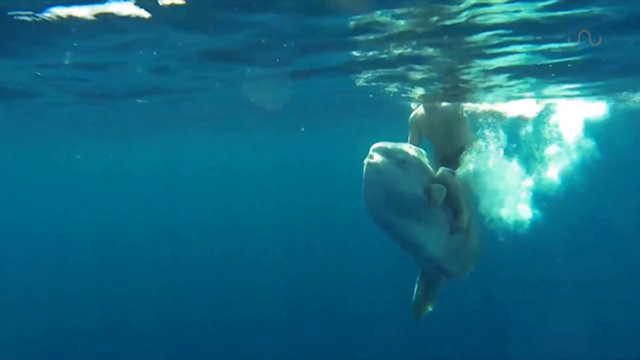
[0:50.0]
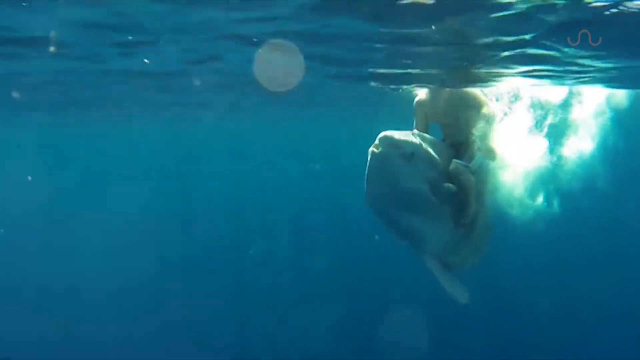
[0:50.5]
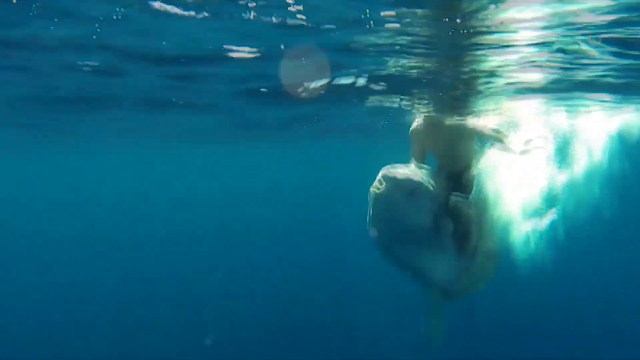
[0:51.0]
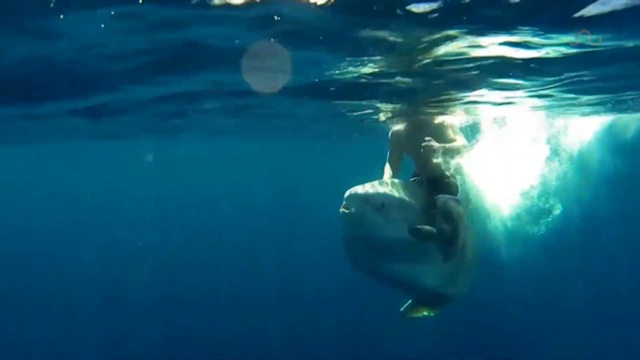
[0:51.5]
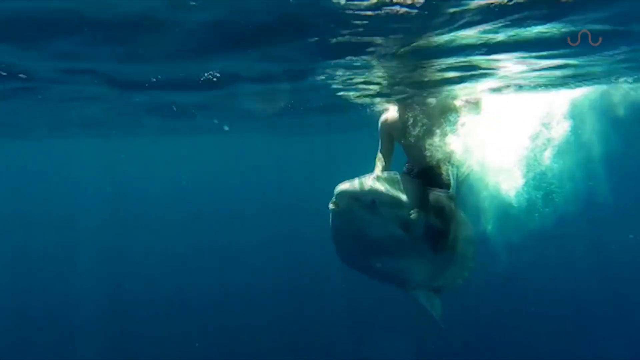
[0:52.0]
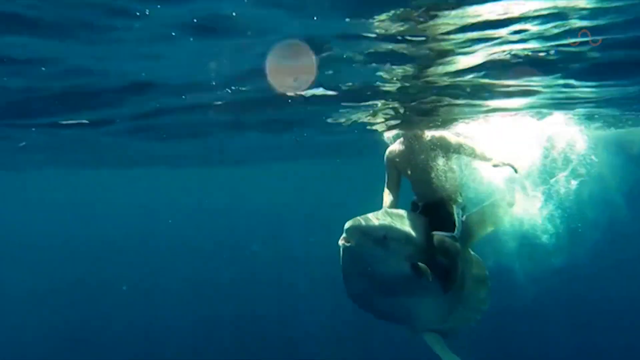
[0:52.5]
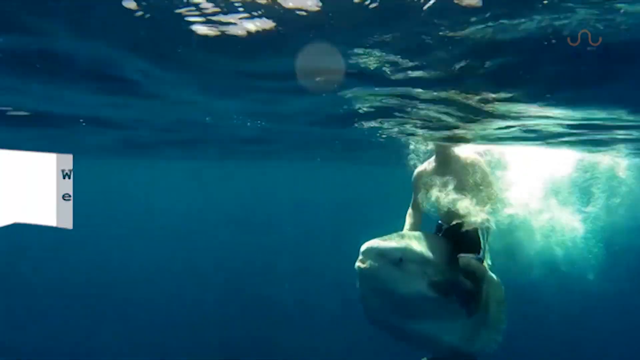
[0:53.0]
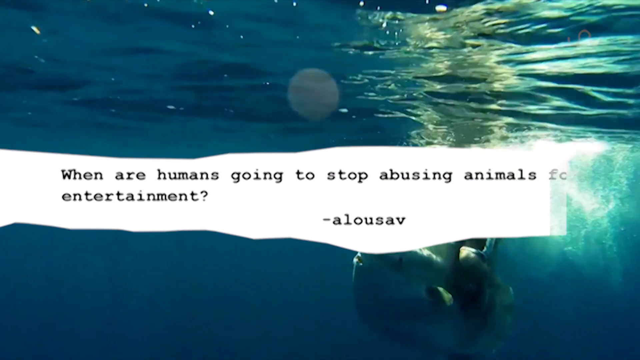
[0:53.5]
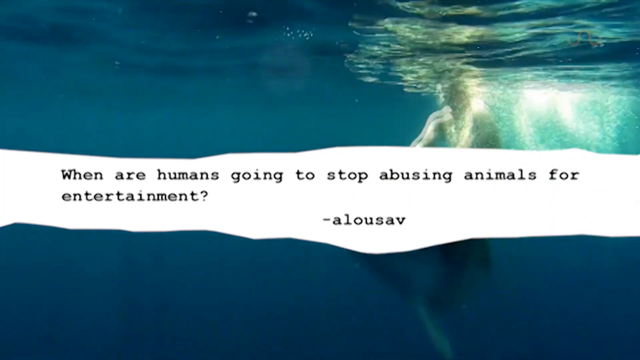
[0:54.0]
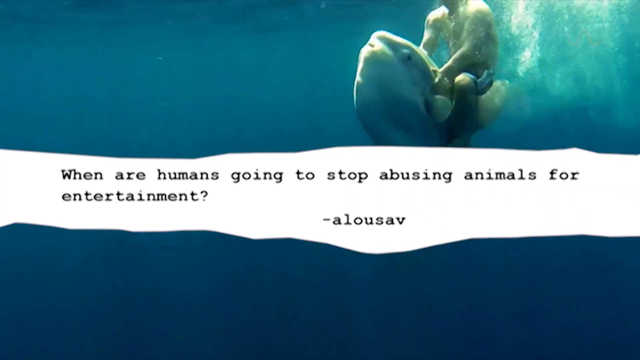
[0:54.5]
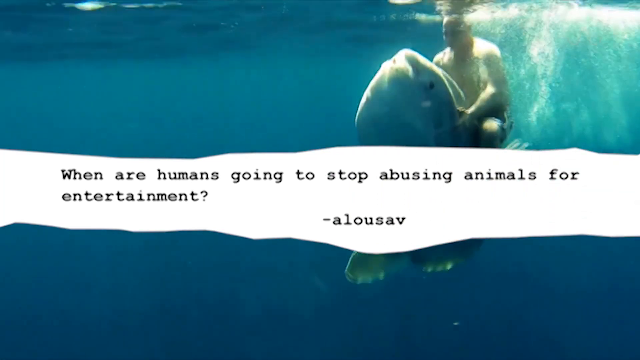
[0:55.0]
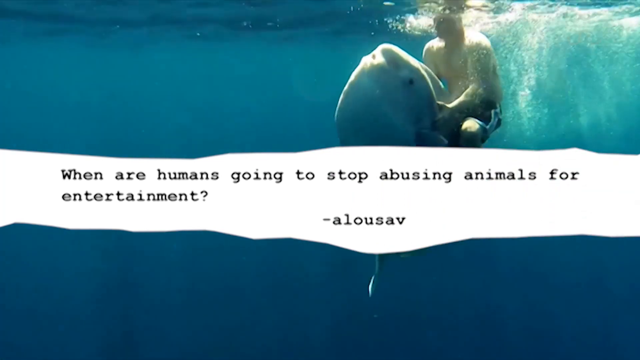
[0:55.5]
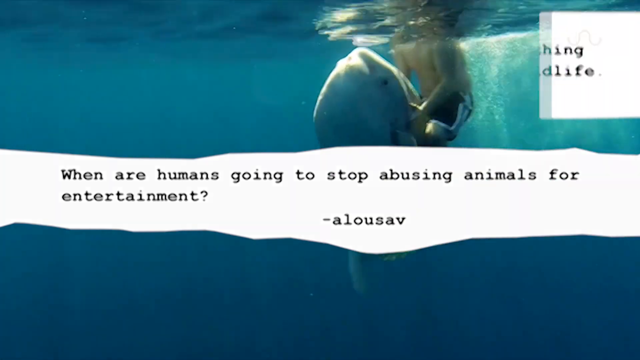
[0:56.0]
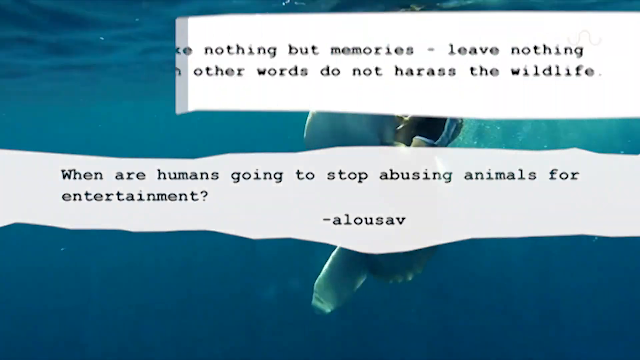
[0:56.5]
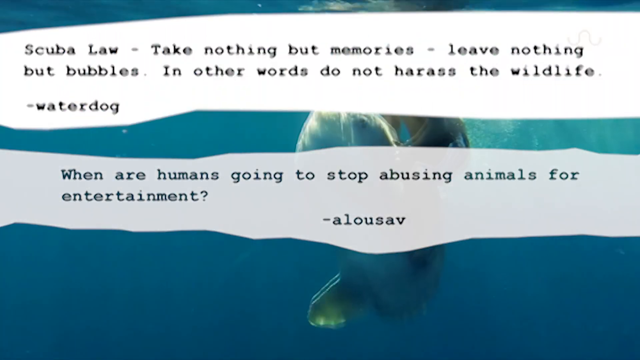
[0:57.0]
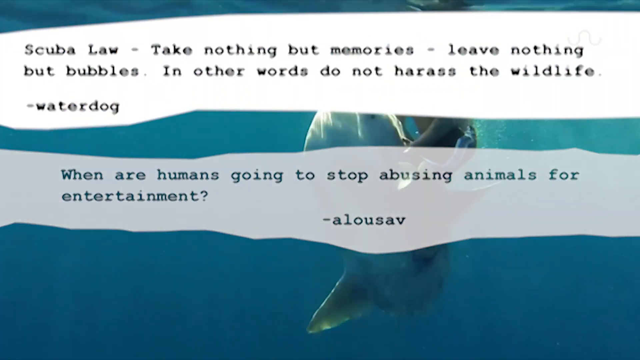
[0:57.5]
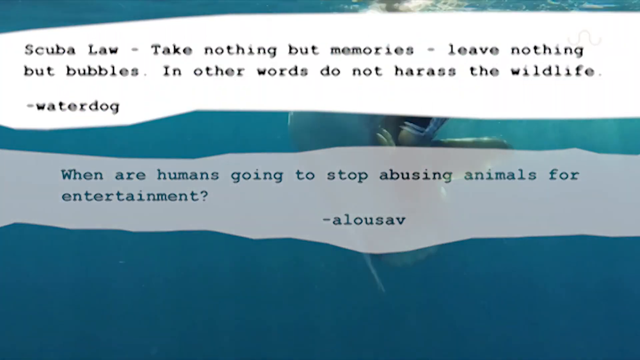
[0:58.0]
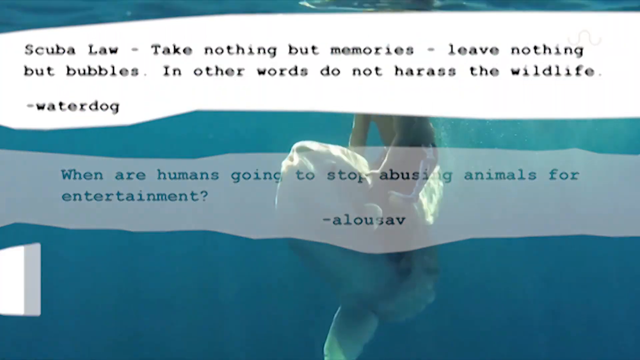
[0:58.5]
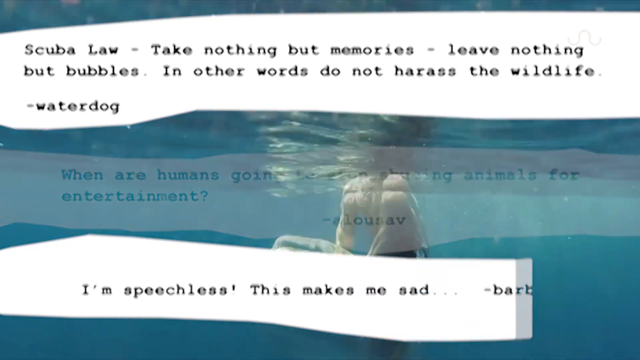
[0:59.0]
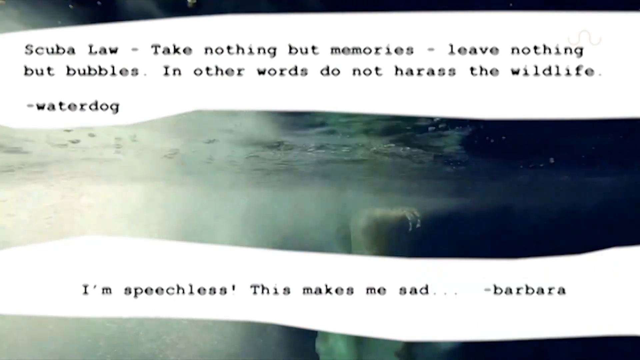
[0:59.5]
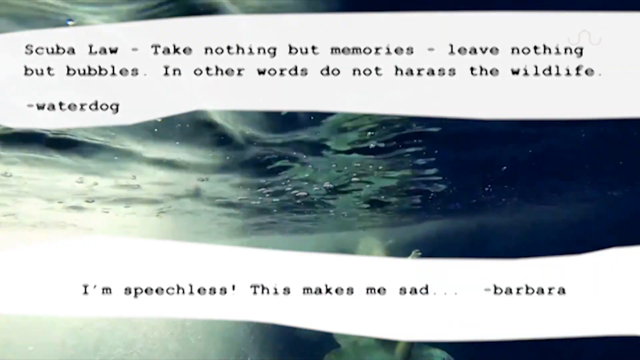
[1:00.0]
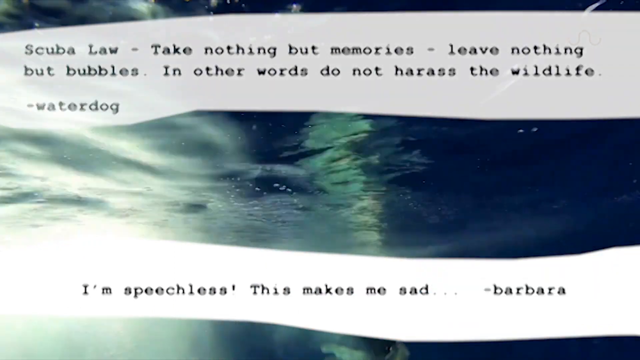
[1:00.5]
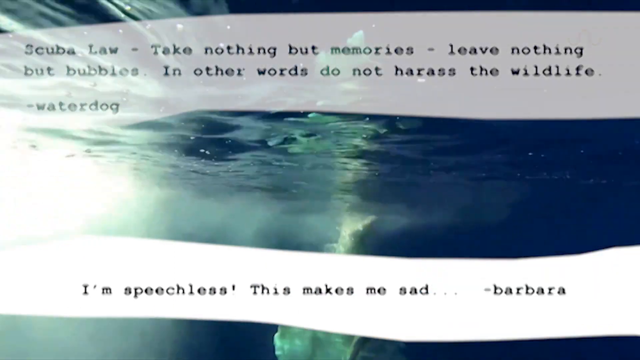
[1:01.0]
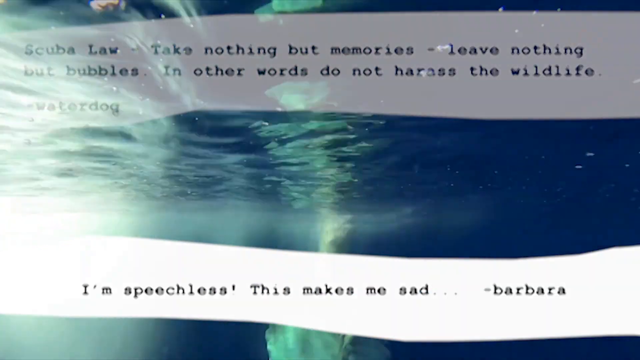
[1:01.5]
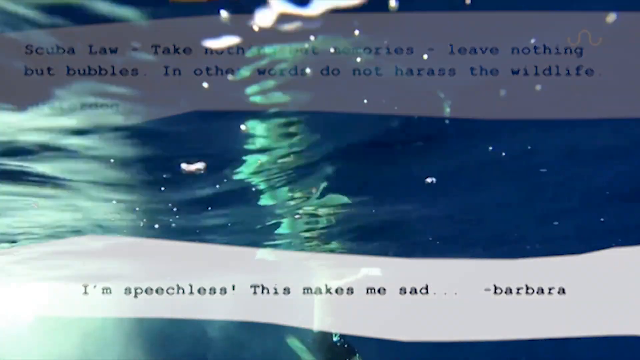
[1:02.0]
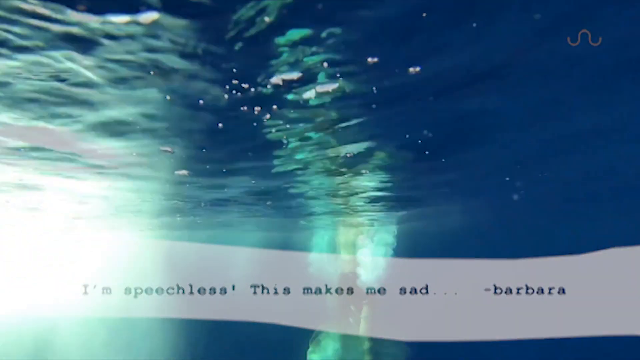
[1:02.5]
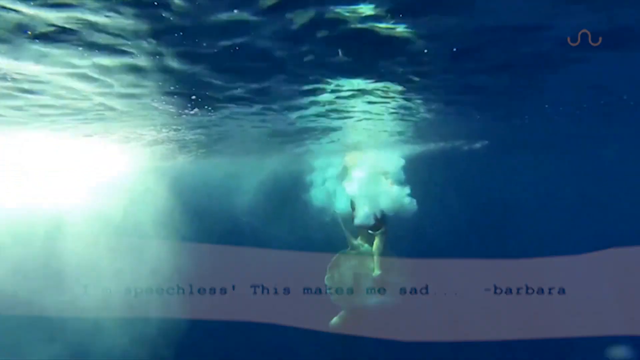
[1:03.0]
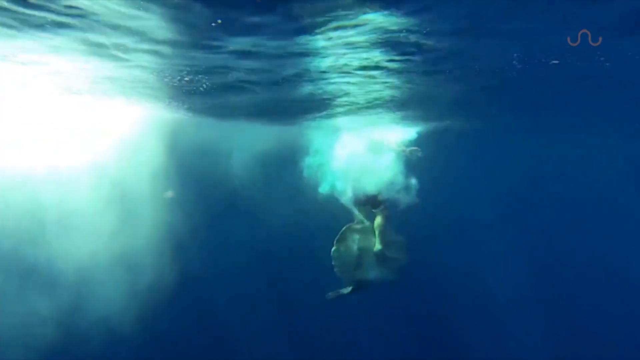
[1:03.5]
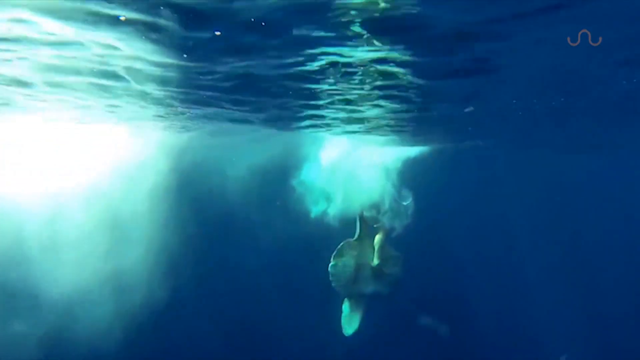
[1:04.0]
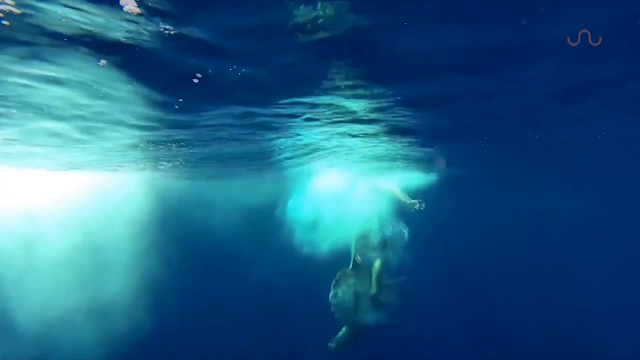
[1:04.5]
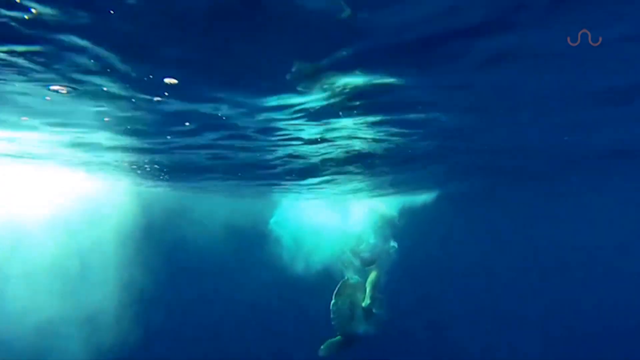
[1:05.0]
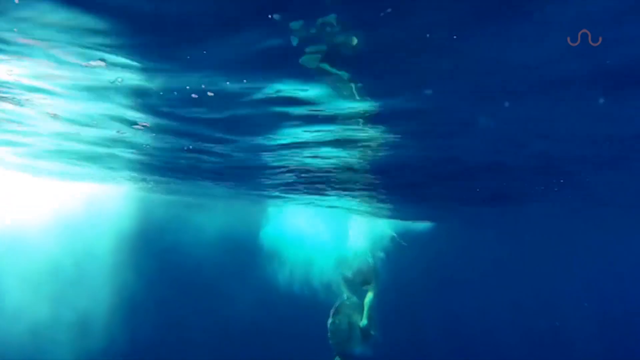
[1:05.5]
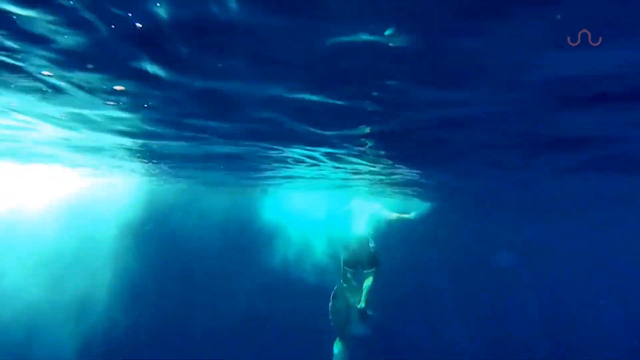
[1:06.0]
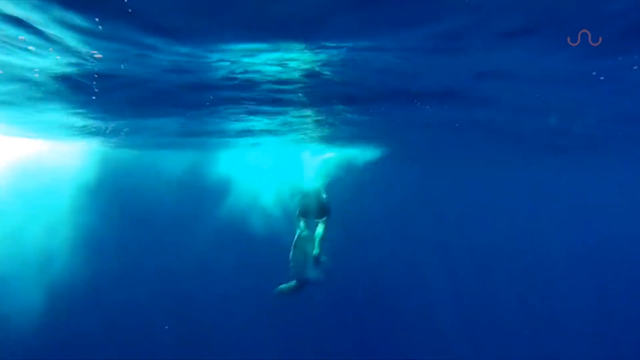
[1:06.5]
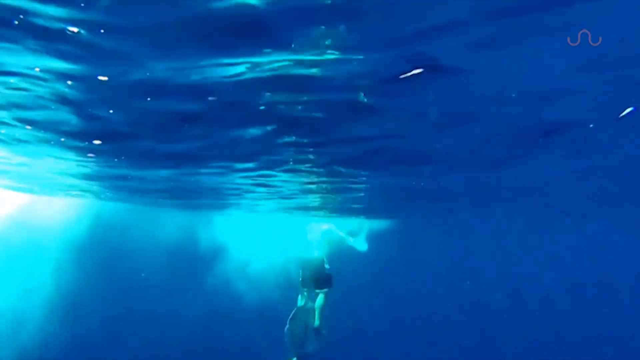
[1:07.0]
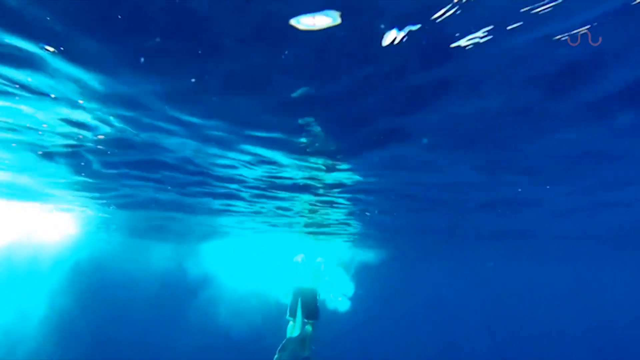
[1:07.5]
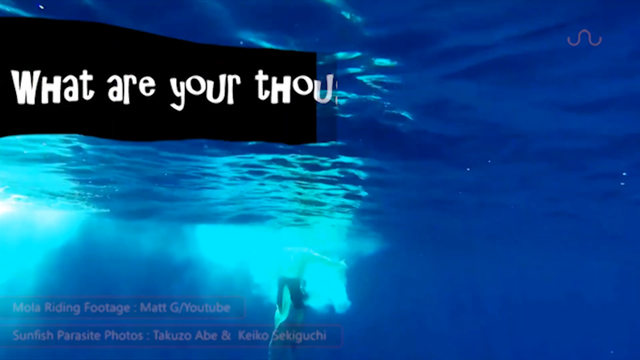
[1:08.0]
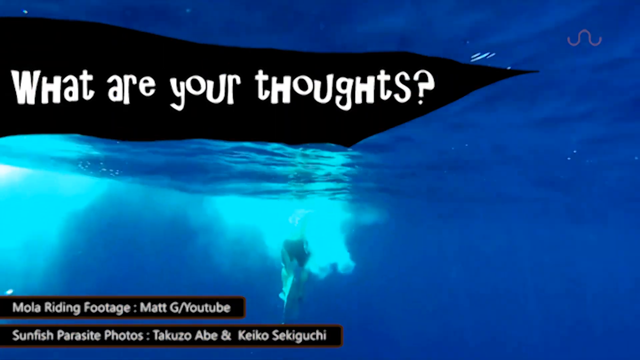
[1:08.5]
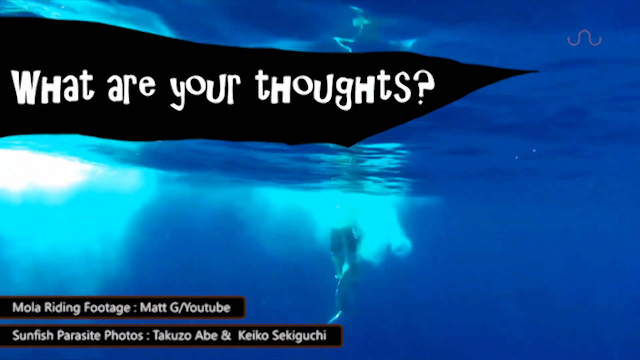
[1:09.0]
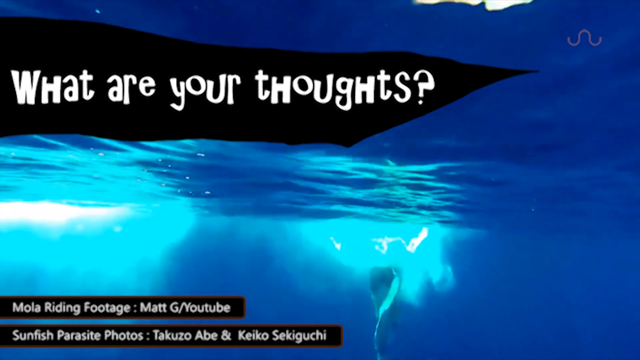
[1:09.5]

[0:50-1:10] The footage continues with the guy riding the whale-shark-like creature, with some bubbles in the water. On-screen text reads "when humans going to stop abusing animals for entertainment", and more text appears at the bottom. Further text follows, including "let us know in the comments below", a mention of Mola riding footage, text apparently explaining the footage, and text saying a Sunfish Paradise photo was taken by somebody else. The video seems to show something like a time-lapse.